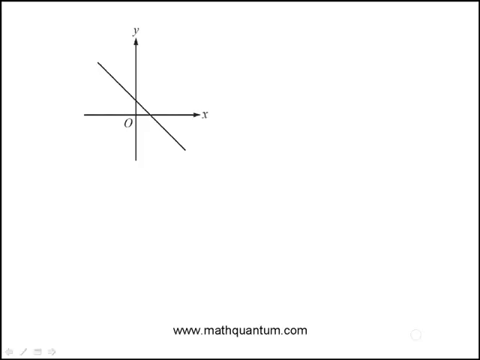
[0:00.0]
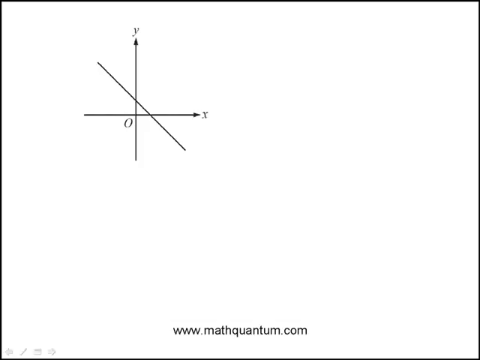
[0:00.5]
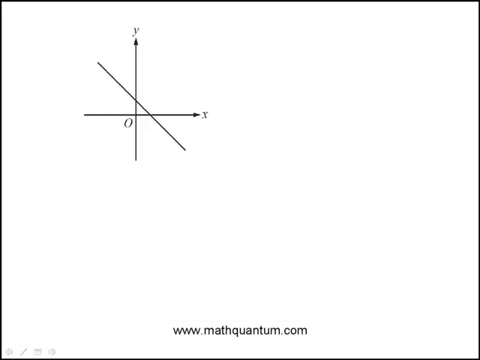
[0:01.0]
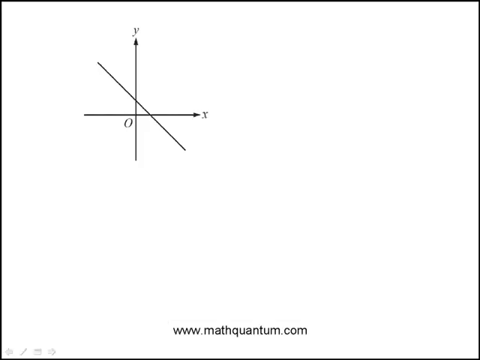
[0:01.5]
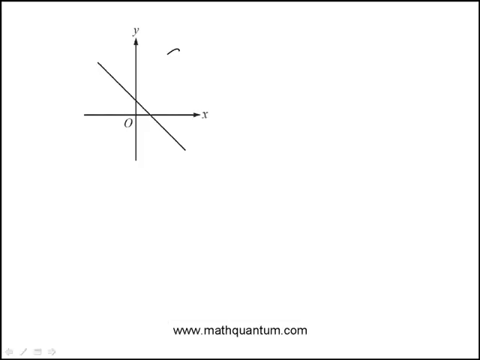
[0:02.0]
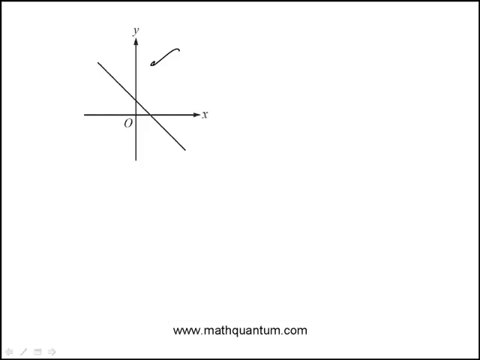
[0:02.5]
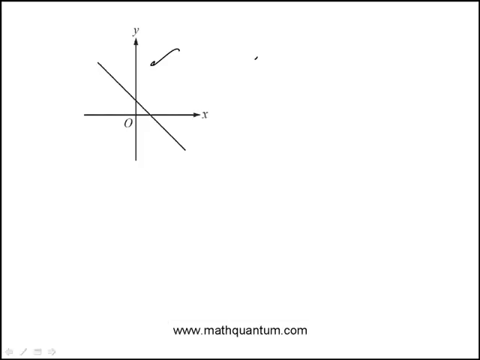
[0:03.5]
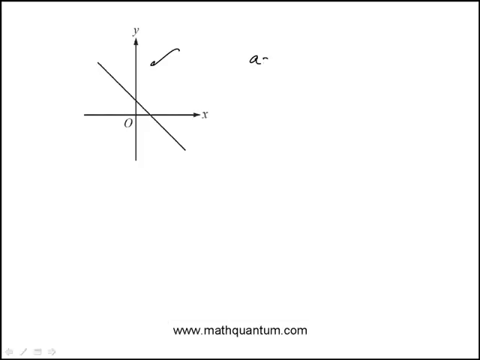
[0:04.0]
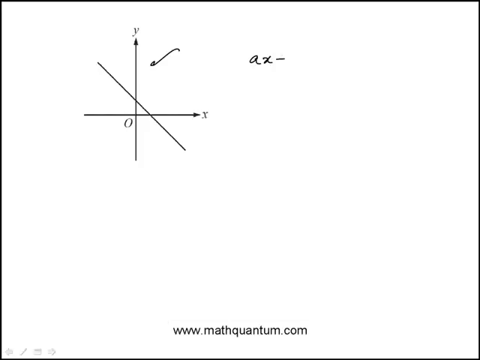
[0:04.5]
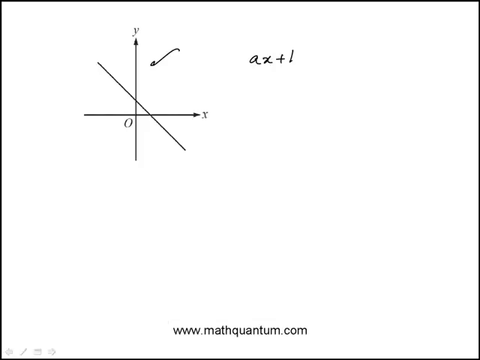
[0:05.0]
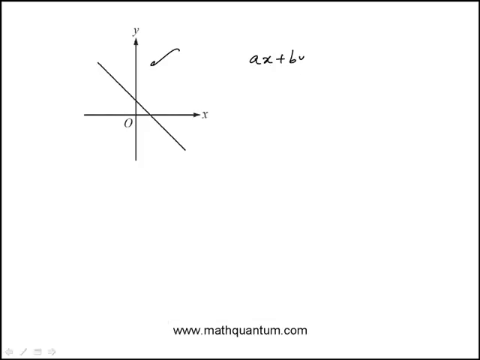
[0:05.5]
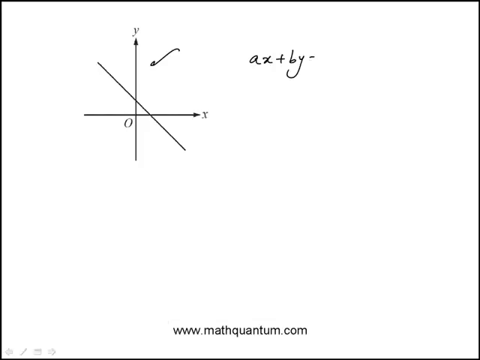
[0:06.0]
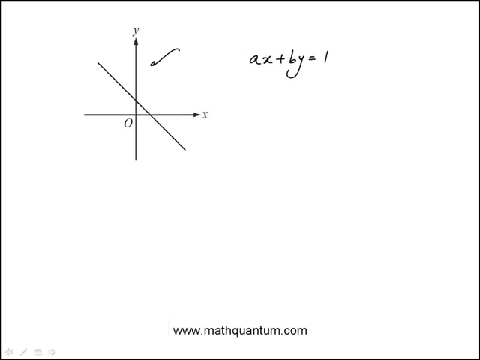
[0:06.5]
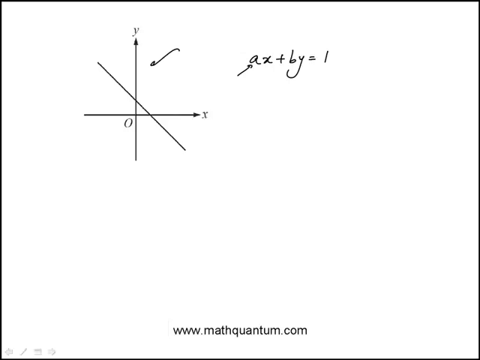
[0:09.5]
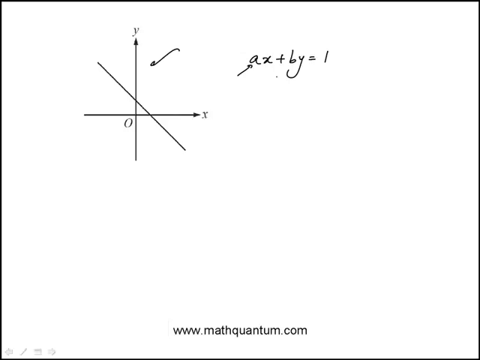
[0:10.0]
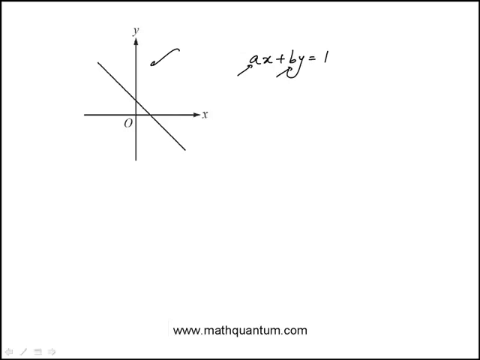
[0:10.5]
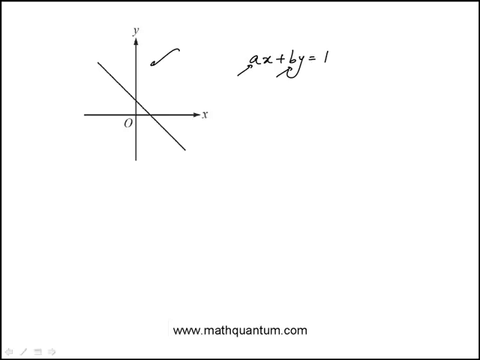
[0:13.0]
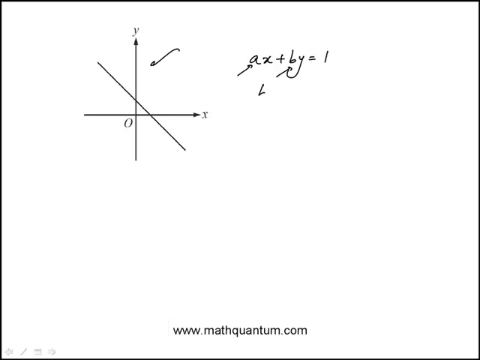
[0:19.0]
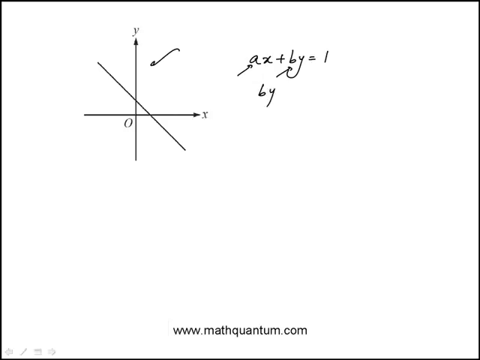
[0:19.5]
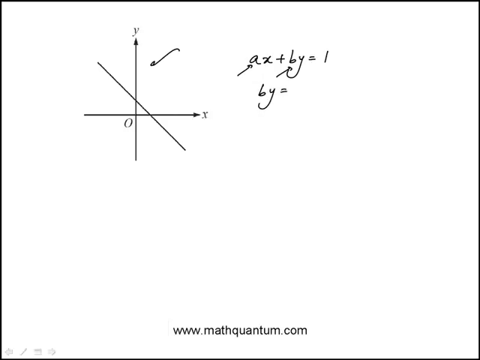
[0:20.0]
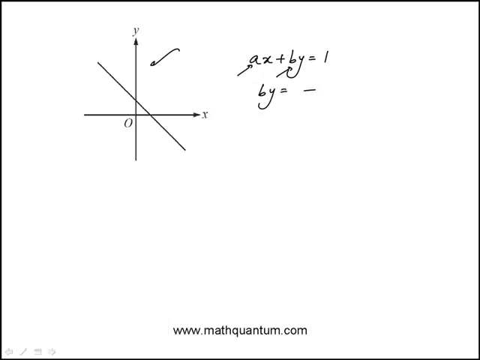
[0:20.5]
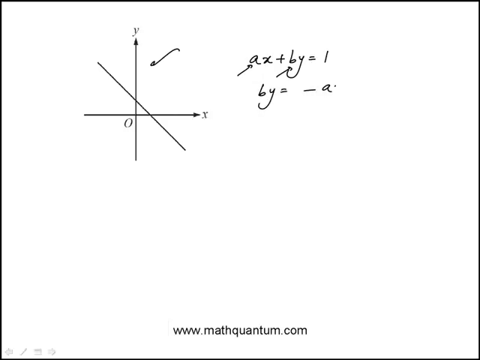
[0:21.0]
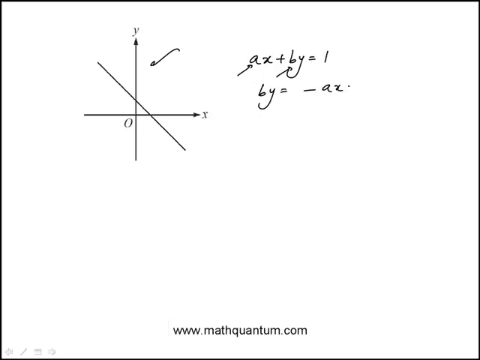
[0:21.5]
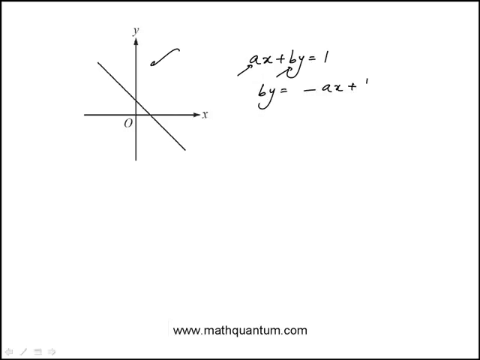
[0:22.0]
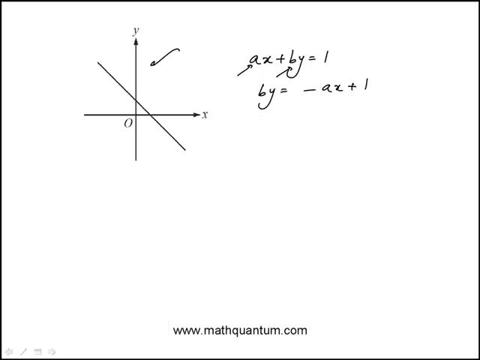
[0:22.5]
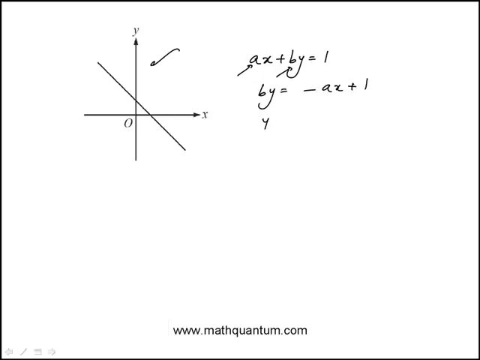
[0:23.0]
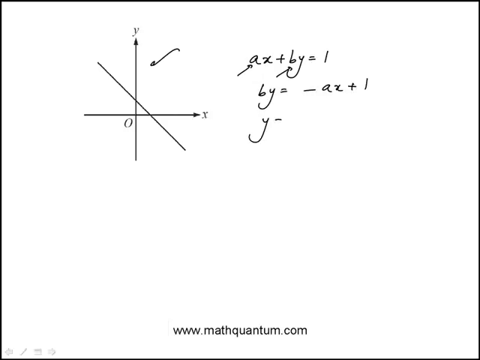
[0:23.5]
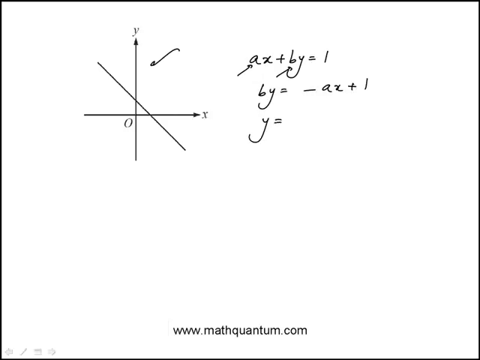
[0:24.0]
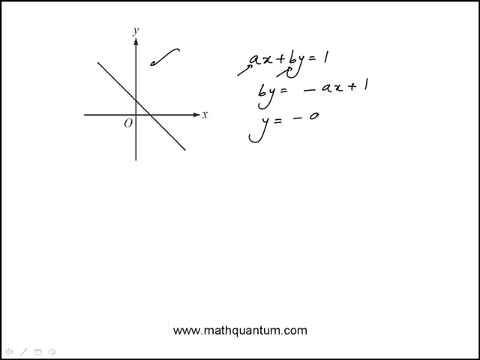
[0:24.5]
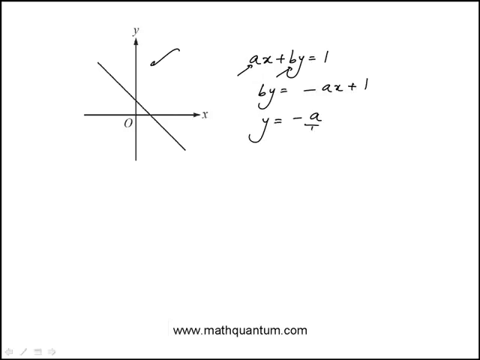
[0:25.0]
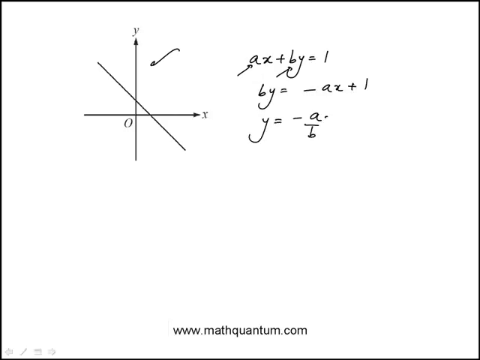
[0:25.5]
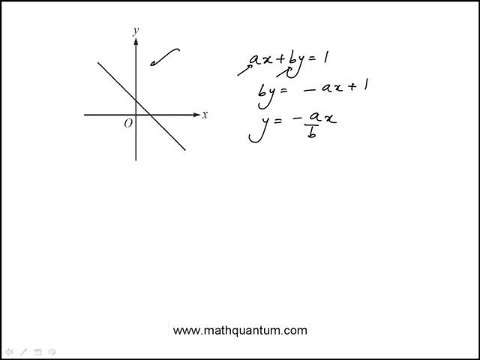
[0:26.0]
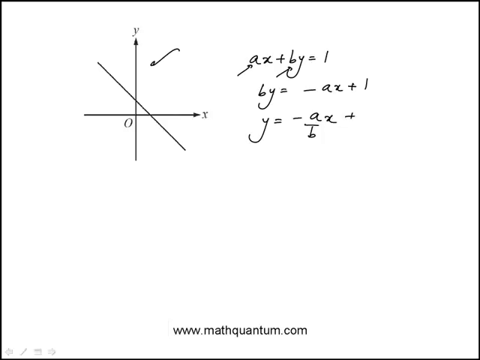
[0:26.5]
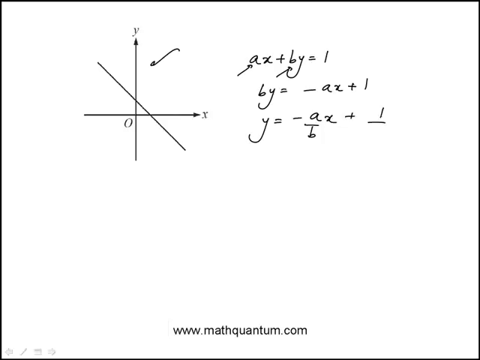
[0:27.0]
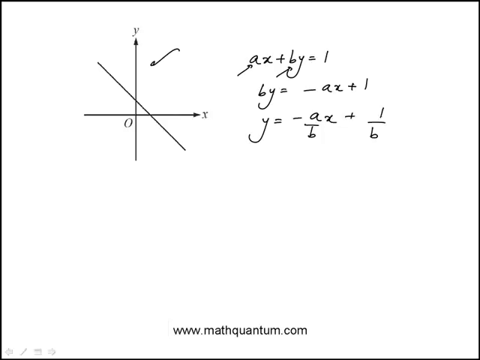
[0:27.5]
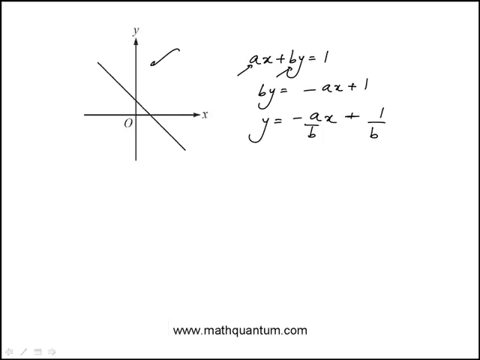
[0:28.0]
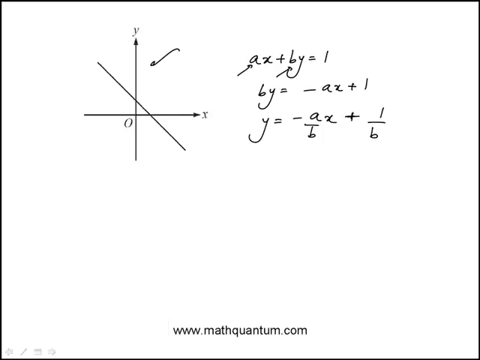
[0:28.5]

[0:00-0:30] A mathematical equation is displayed on the screen. At the bottom of the page is "www.mathquantum.com", and the rest is a blank white screen. In the top left are multiple lines on top of one another: a y-axis and an x-axis, with a line cutting through both of them to create a triangle. Another line is drawn, and a person writes ax + by = 1 on the screen. They add two arrows, one pointing at the a and one pointing at the b. The handwriting is good, and they look to be using an electronic notepad to draw this. Below that they write by = −ax + 1, and right below it −ax/b + 1/b. These equations are written to the right of the lines.